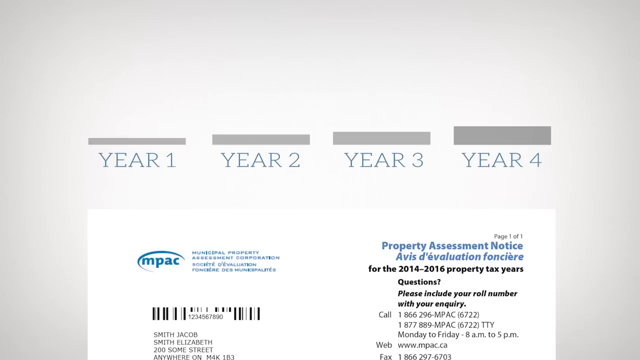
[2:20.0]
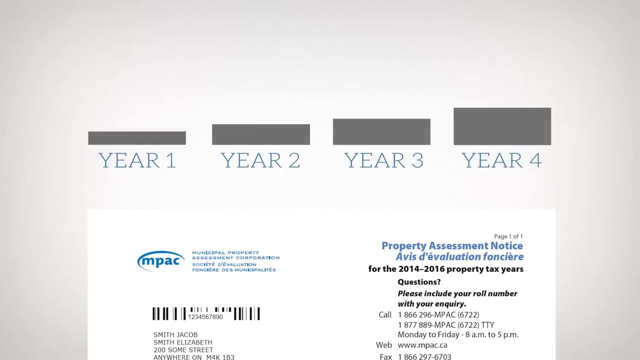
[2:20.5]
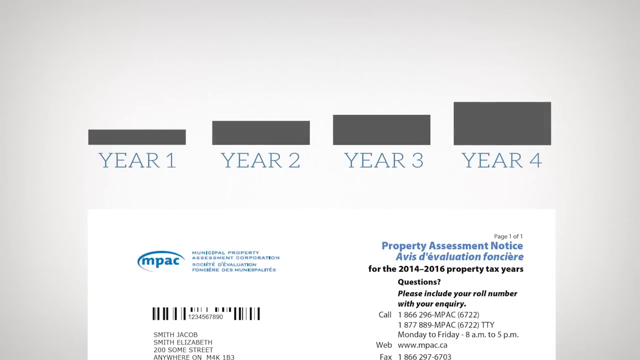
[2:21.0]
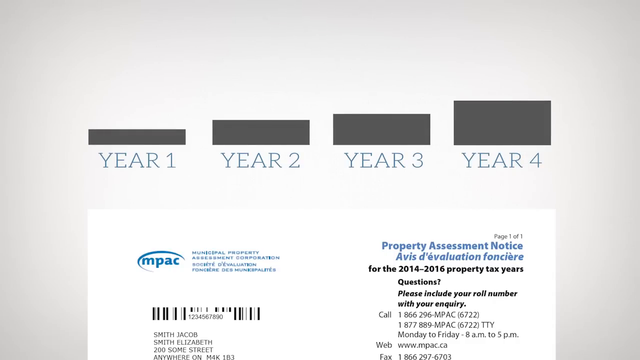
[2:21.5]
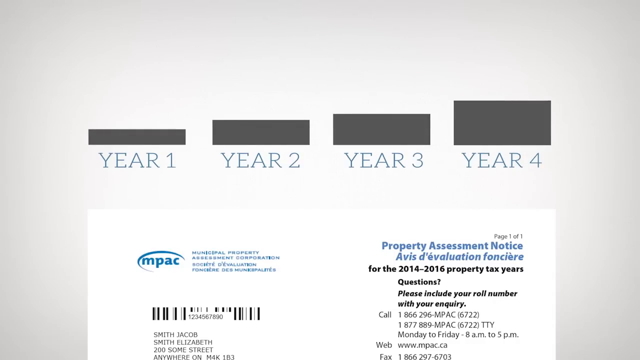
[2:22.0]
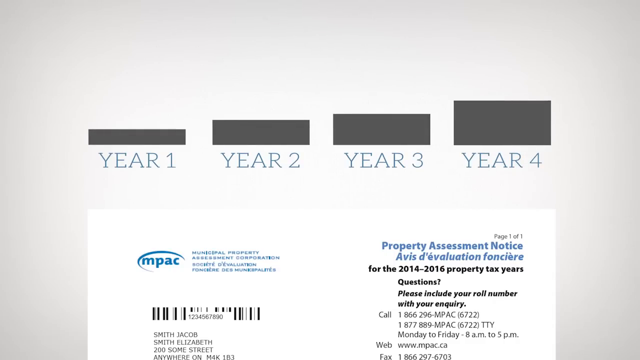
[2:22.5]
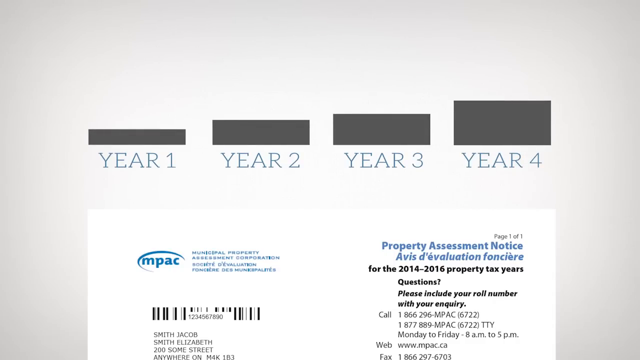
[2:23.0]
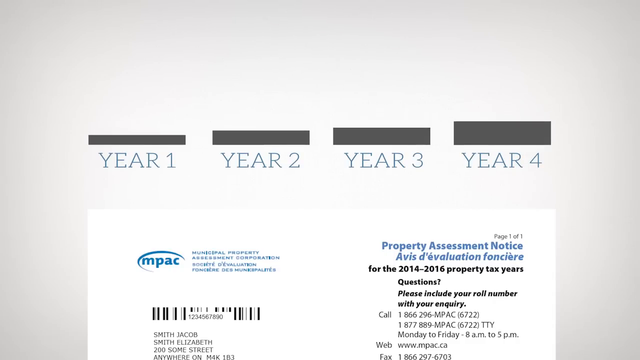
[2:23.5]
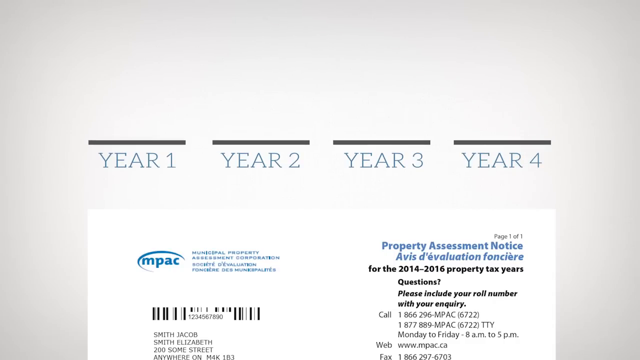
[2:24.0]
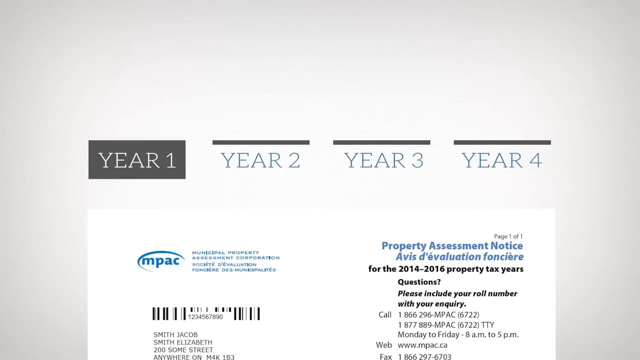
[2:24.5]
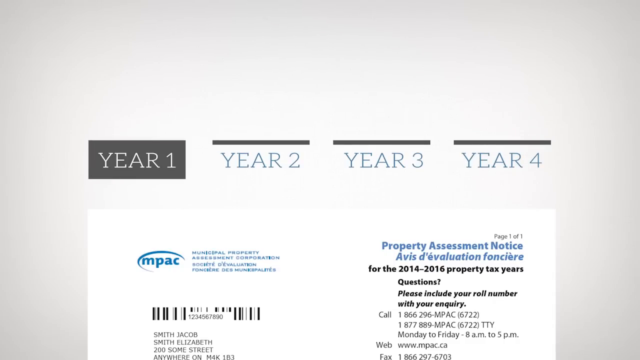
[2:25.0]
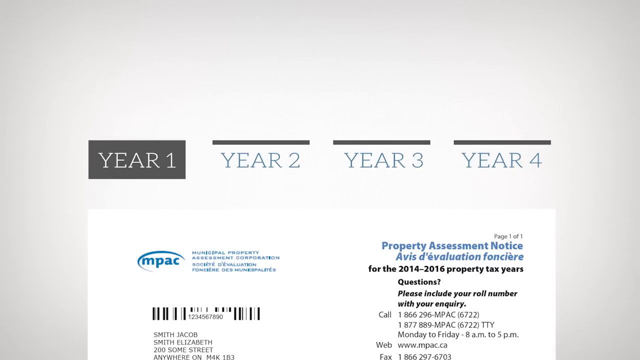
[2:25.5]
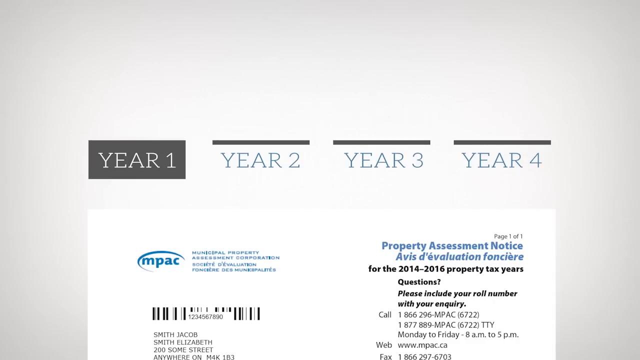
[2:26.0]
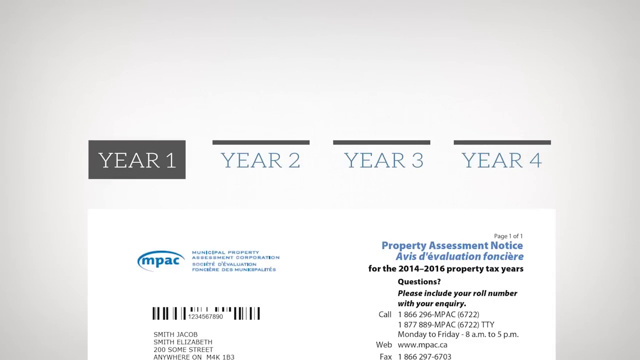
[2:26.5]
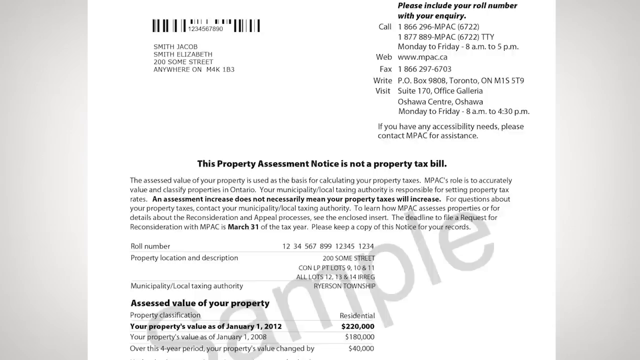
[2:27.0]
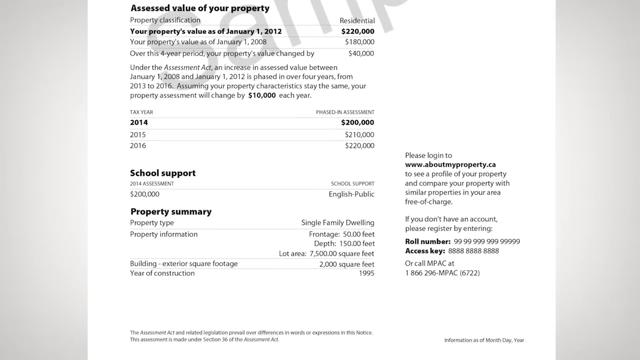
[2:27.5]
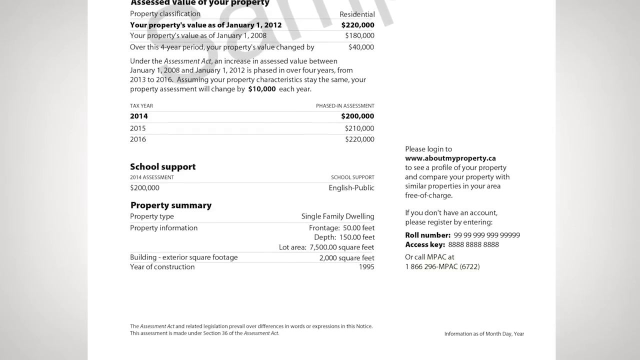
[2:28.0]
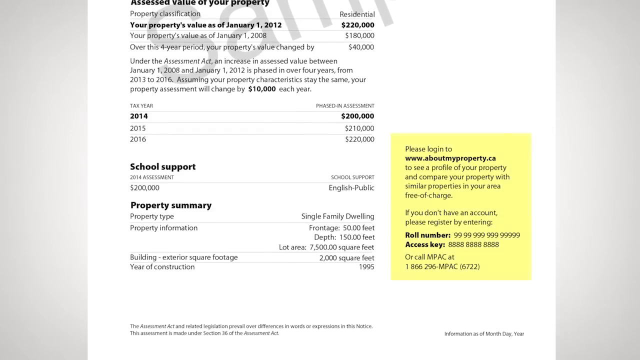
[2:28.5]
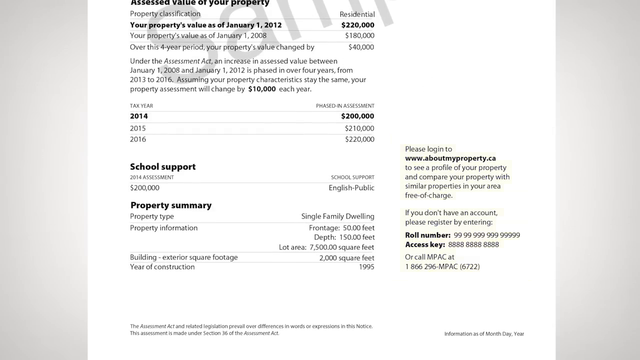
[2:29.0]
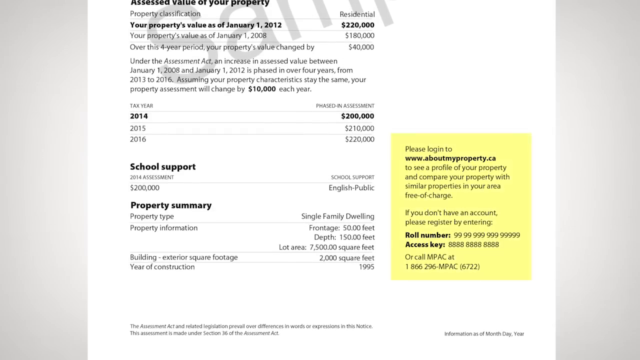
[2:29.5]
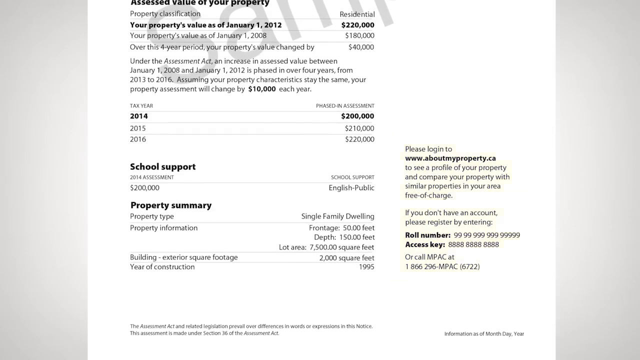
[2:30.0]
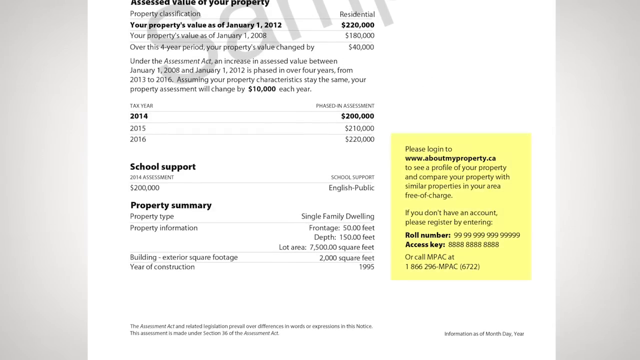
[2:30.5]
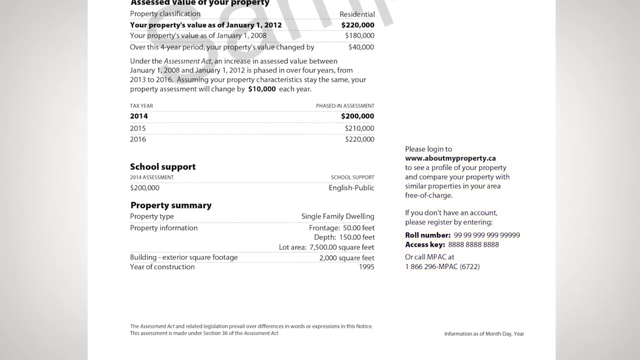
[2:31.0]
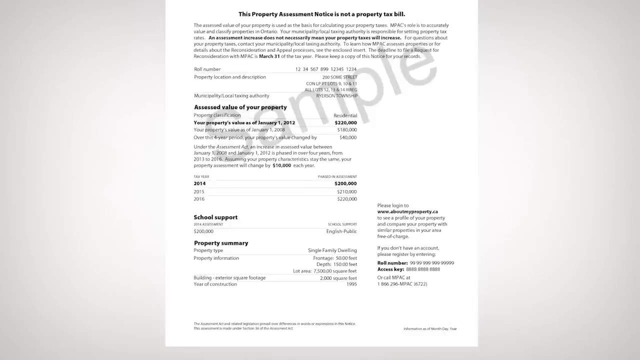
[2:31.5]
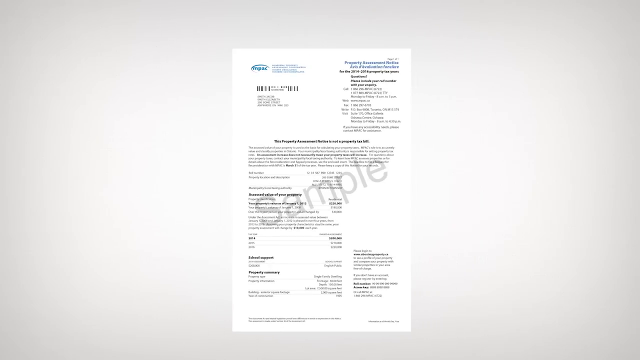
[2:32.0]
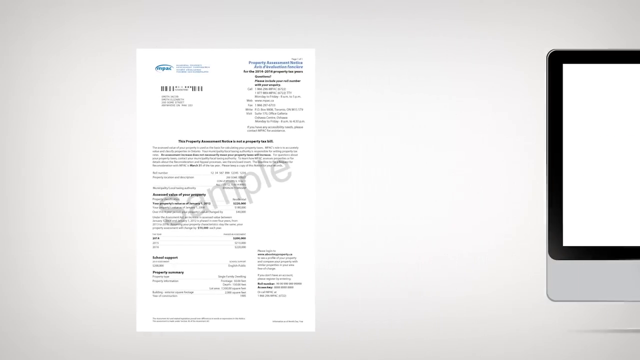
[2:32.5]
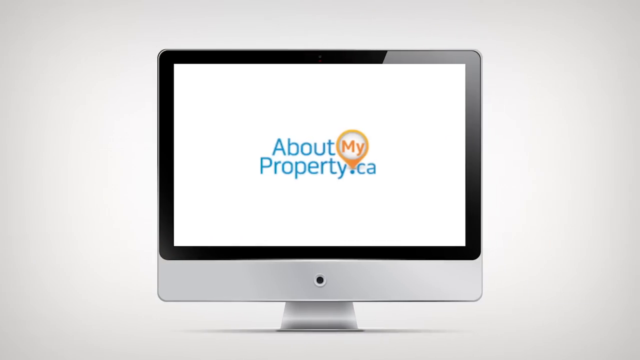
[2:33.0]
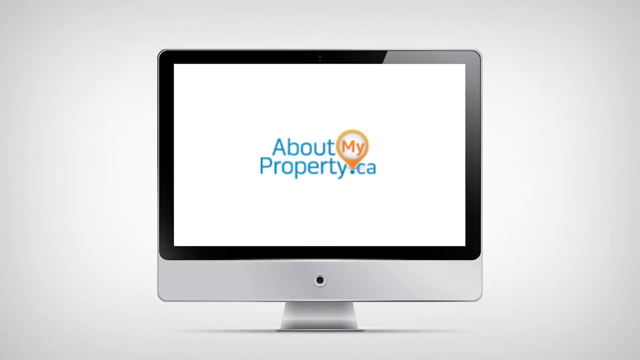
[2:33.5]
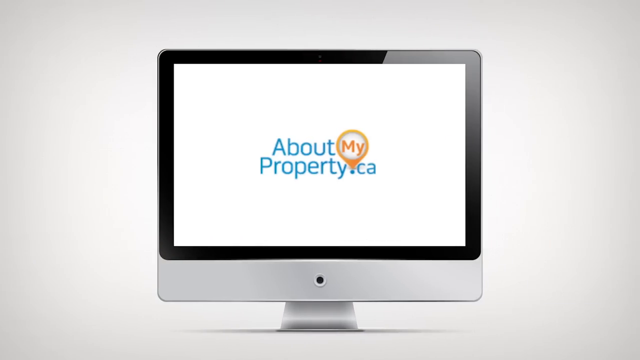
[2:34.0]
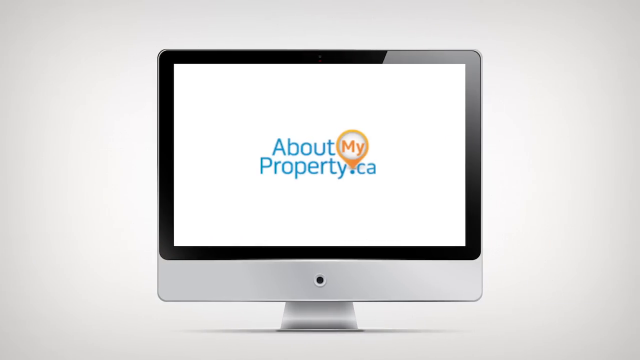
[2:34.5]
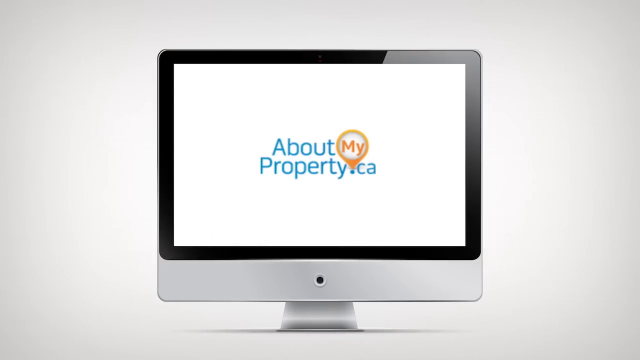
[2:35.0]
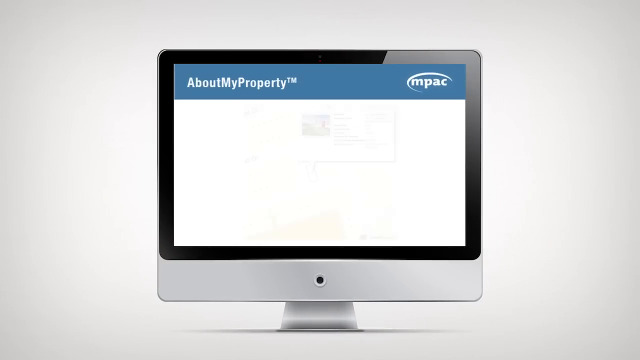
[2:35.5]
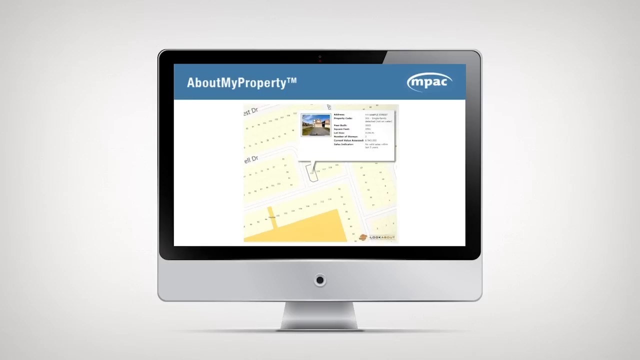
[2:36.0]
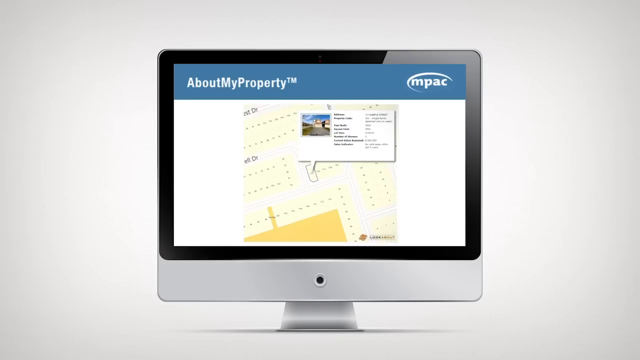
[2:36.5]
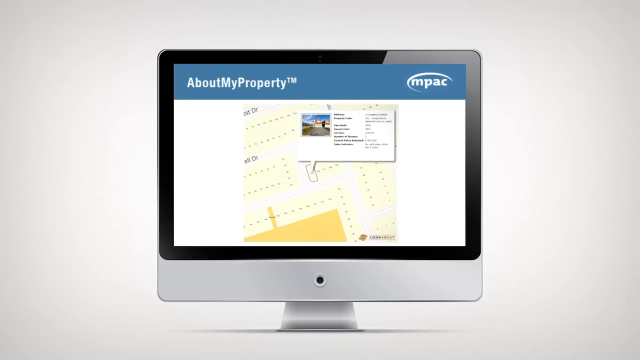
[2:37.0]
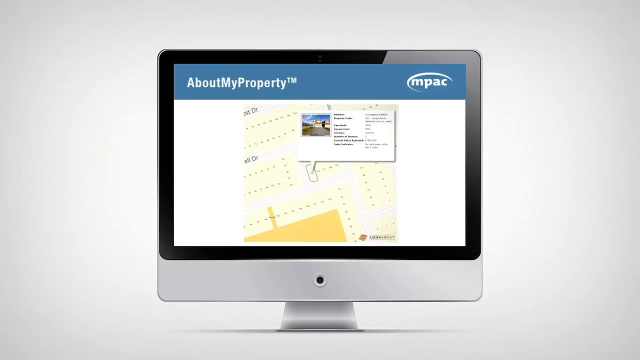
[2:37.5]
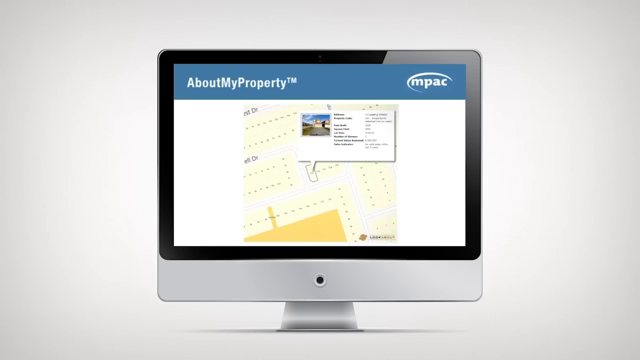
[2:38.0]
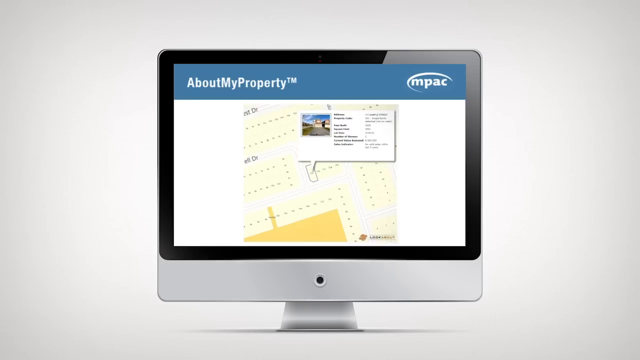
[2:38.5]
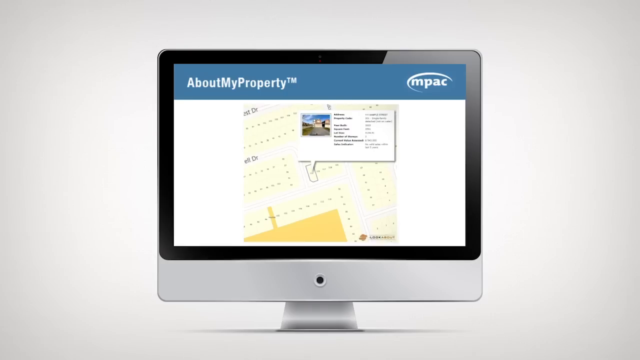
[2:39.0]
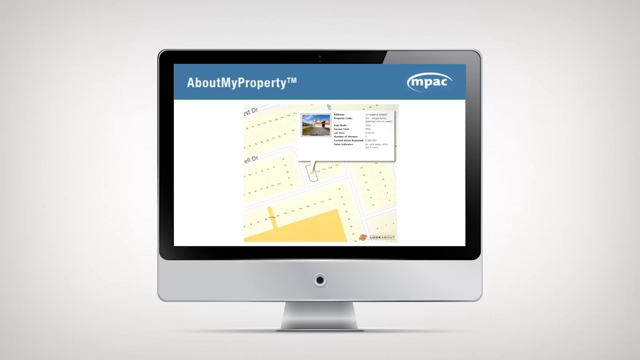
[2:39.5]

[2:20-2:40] A listing of tax years is shown with bar graphs above them, each year's bar larger than the last. Underneath the bar graphs is a document letter that reads "property assessment notice". The video zooms out of the official document, which is seen in the center of the screen with a gray background on either side. Then an image of a computer monitor appears, with a white background and blue text reading "aboutmyproperty.ca".